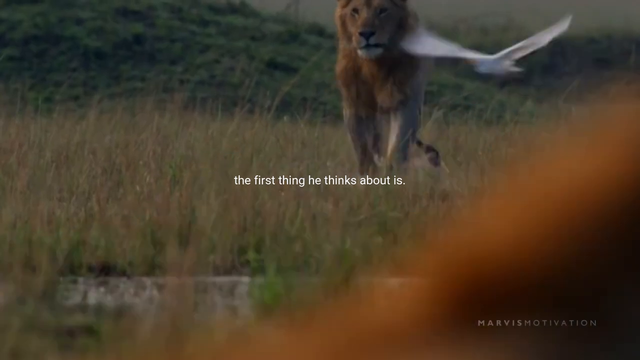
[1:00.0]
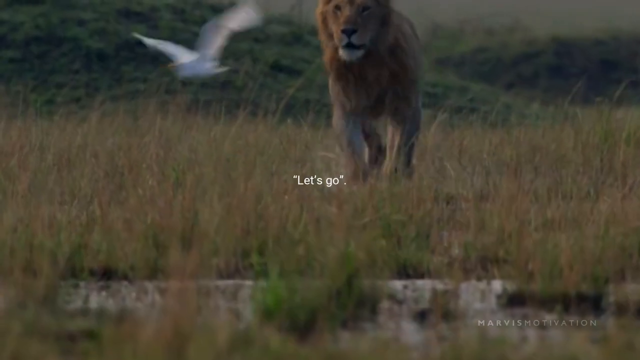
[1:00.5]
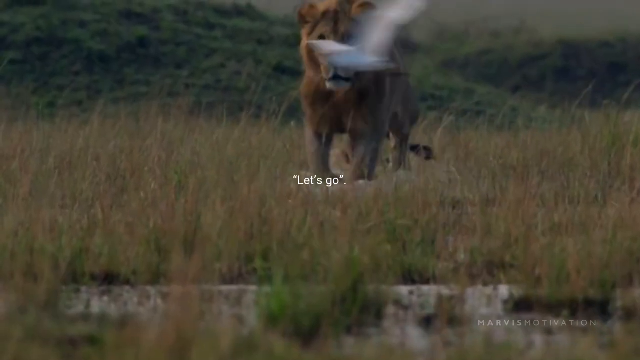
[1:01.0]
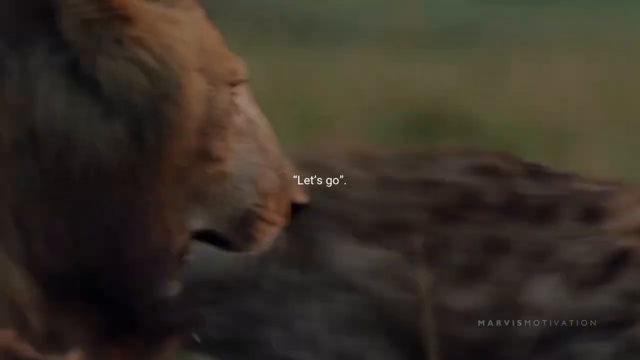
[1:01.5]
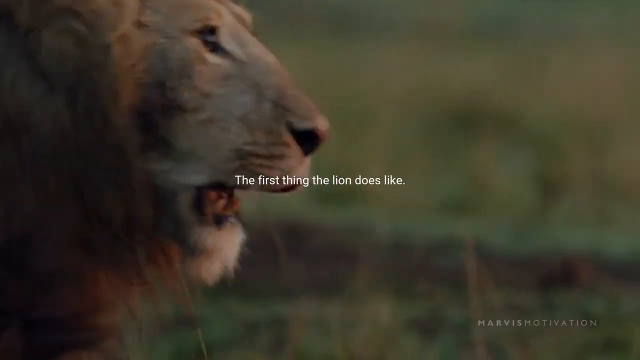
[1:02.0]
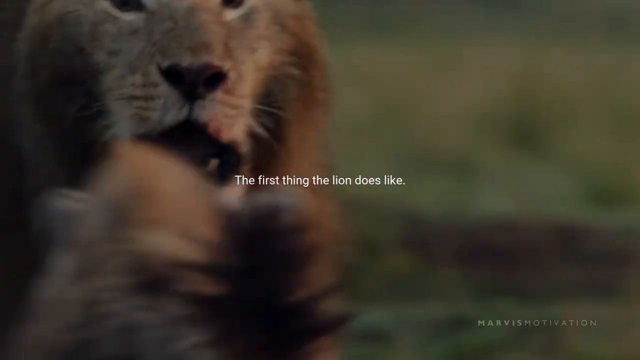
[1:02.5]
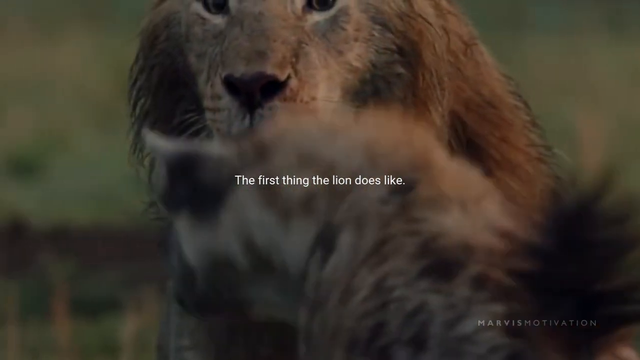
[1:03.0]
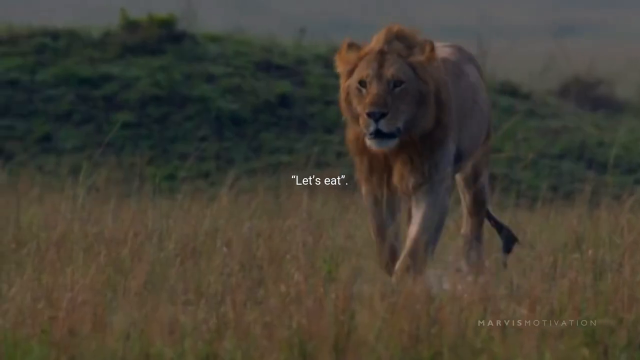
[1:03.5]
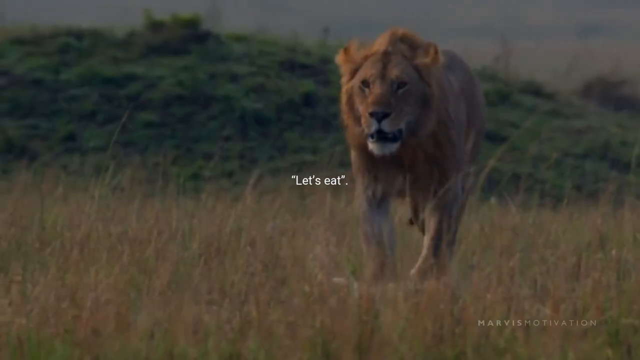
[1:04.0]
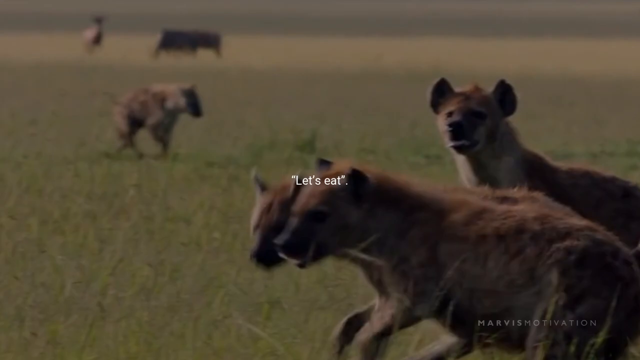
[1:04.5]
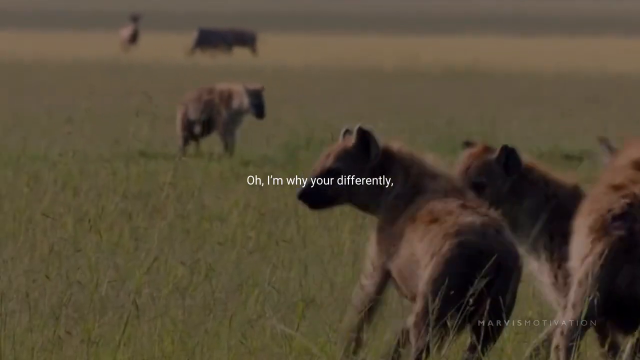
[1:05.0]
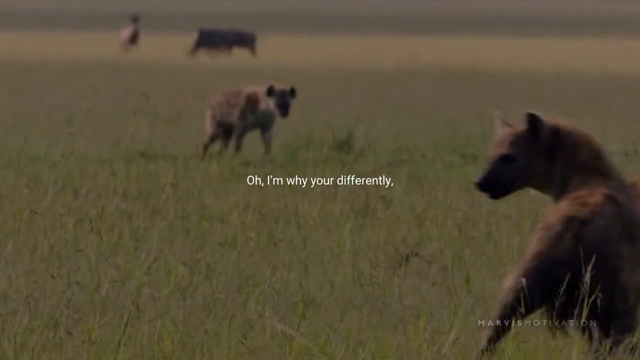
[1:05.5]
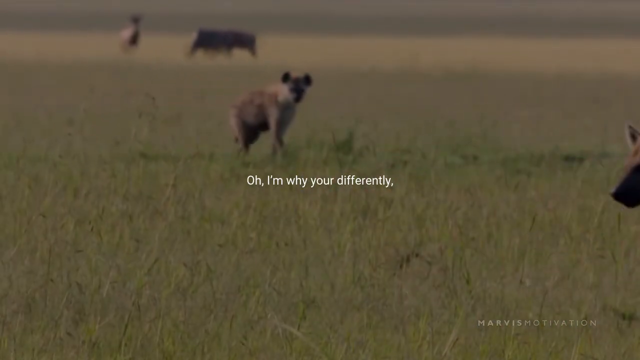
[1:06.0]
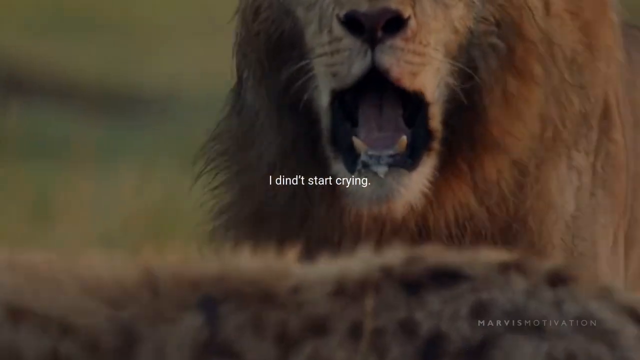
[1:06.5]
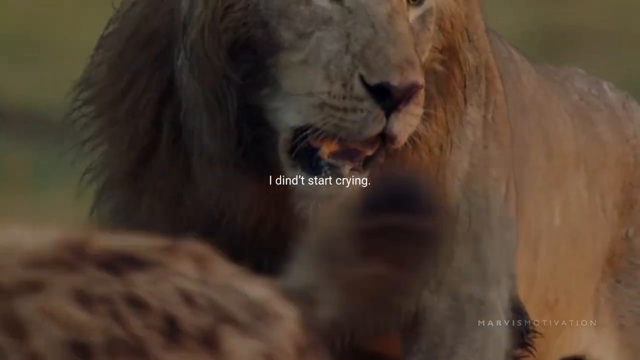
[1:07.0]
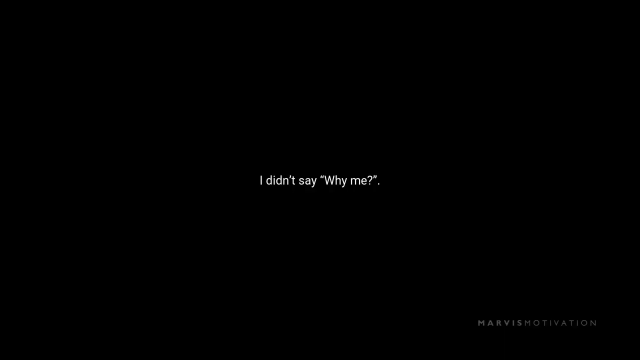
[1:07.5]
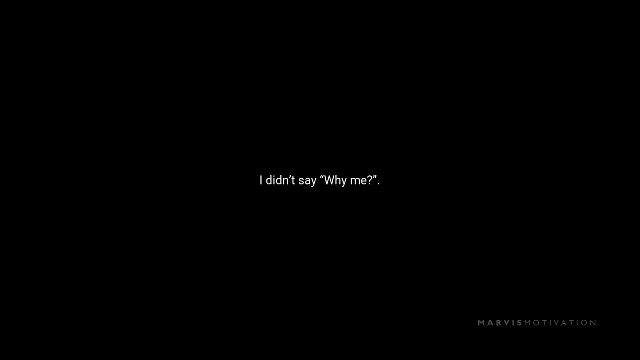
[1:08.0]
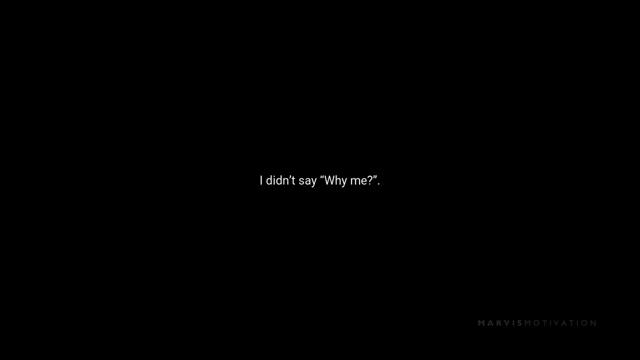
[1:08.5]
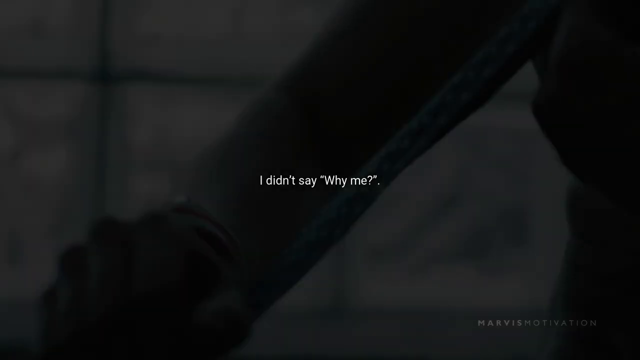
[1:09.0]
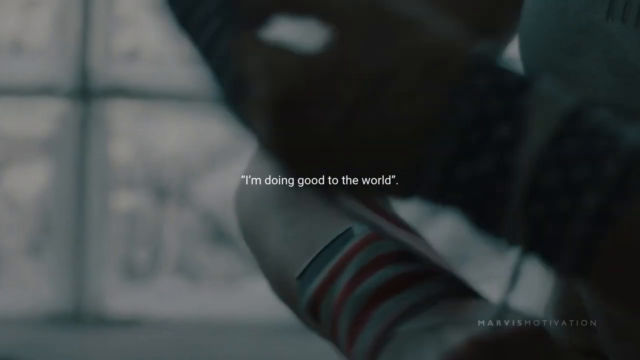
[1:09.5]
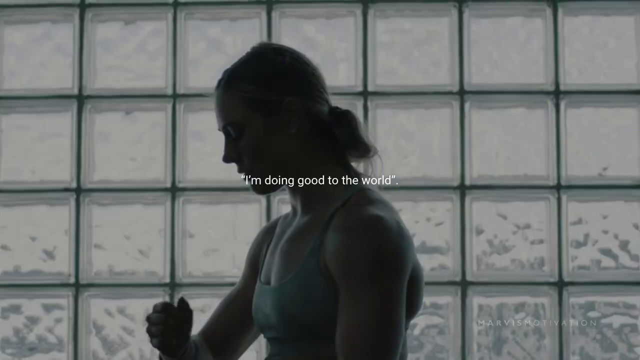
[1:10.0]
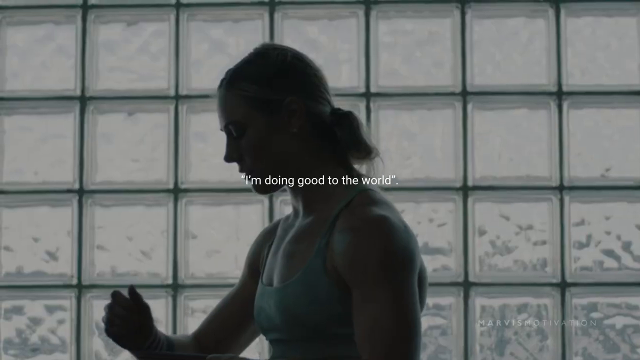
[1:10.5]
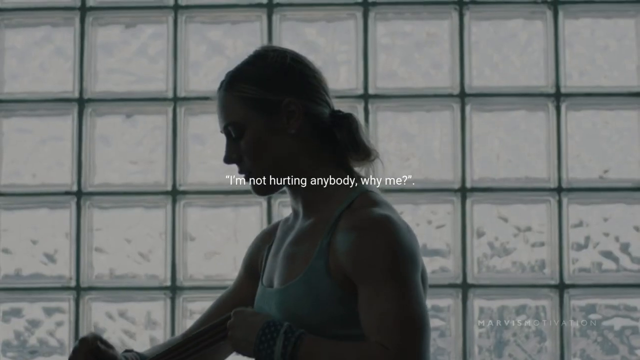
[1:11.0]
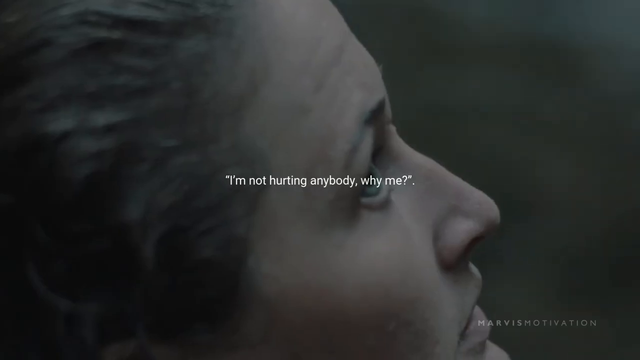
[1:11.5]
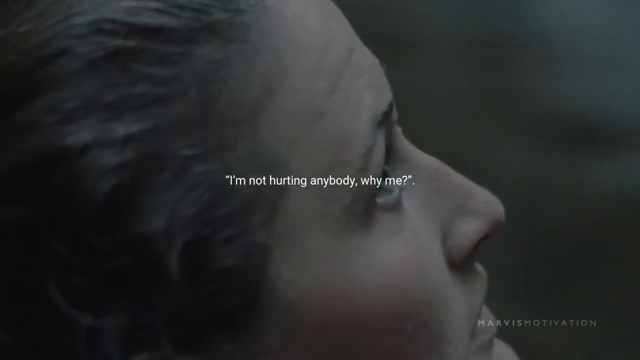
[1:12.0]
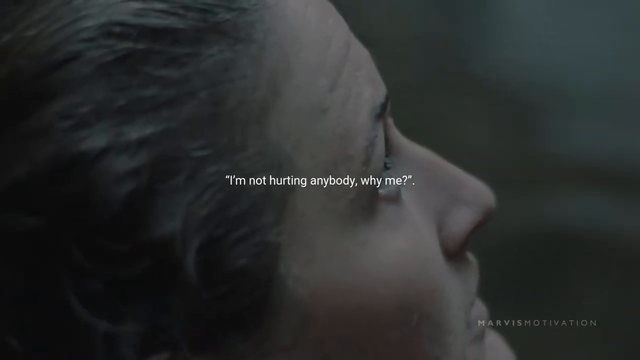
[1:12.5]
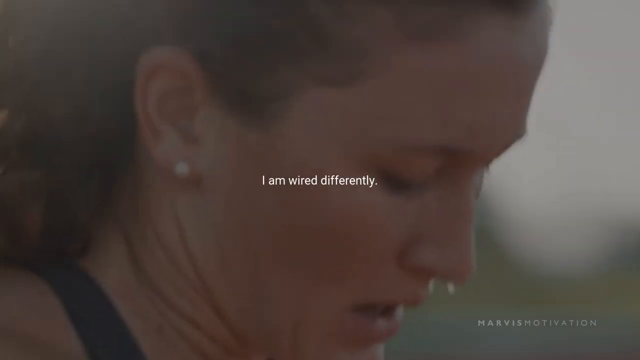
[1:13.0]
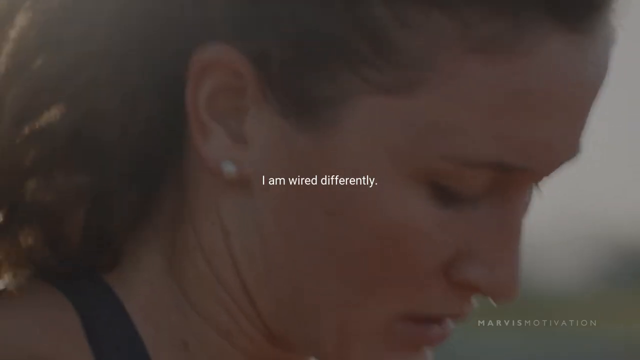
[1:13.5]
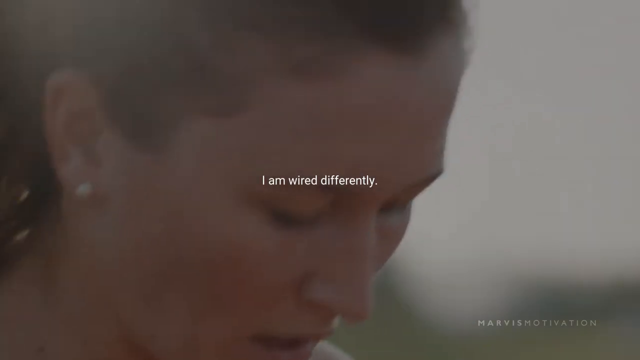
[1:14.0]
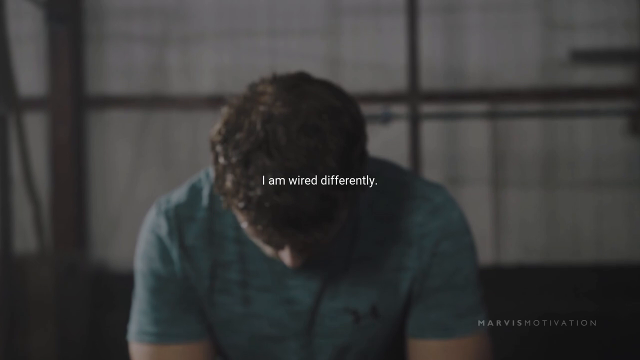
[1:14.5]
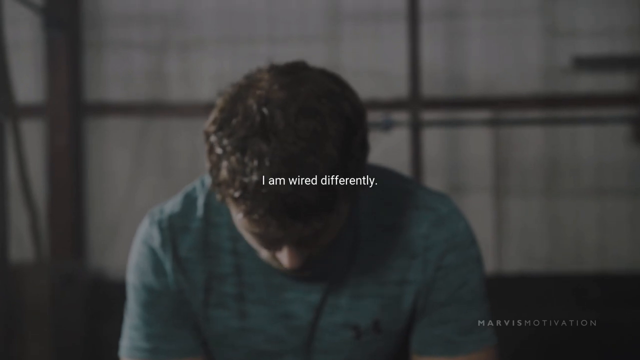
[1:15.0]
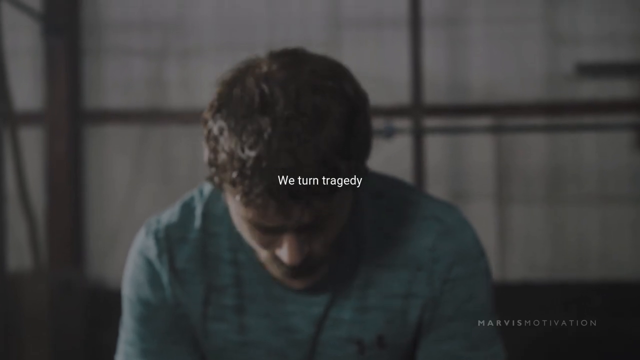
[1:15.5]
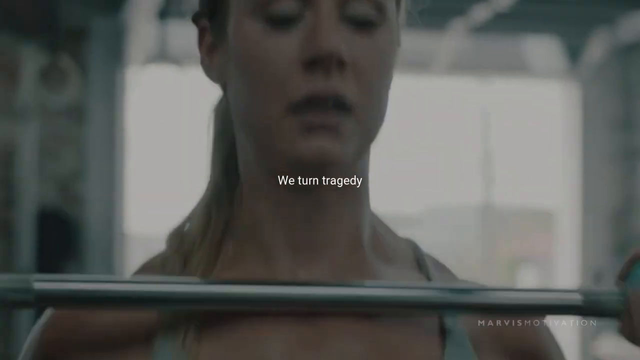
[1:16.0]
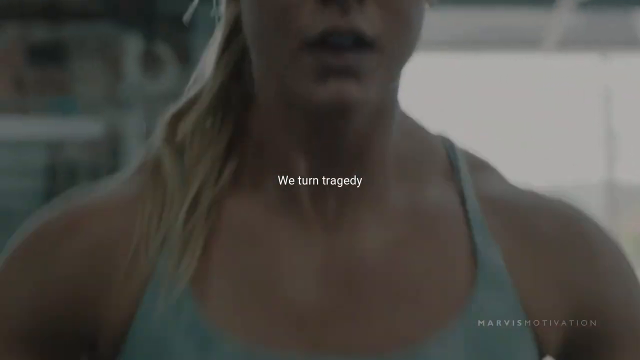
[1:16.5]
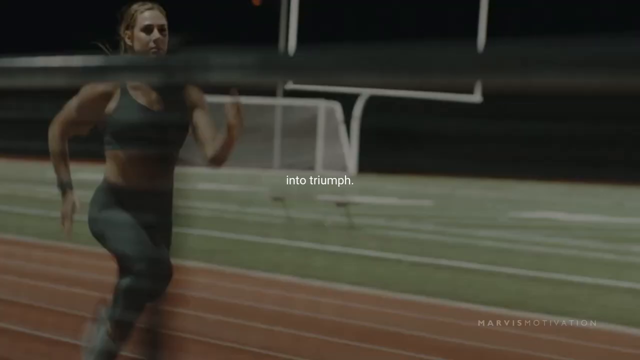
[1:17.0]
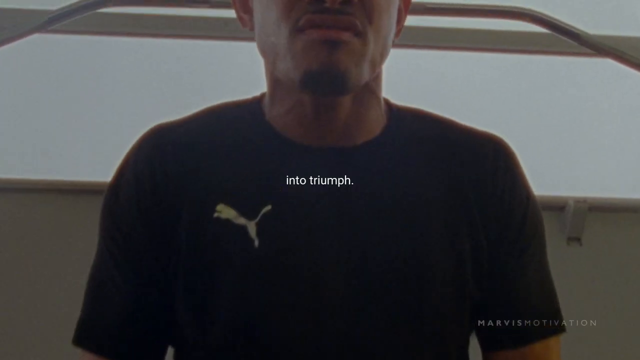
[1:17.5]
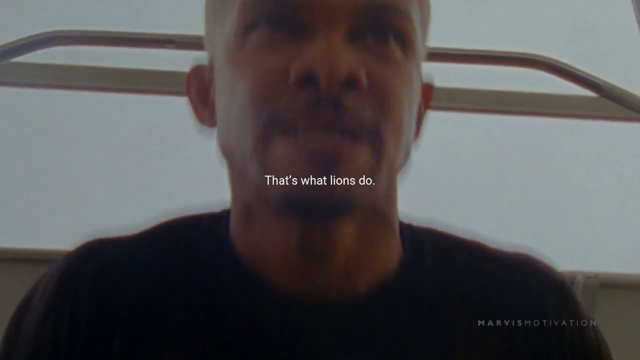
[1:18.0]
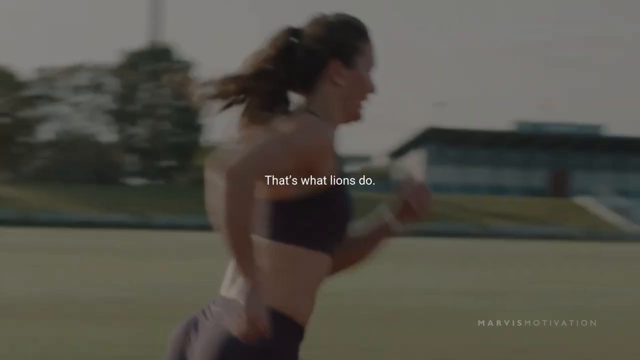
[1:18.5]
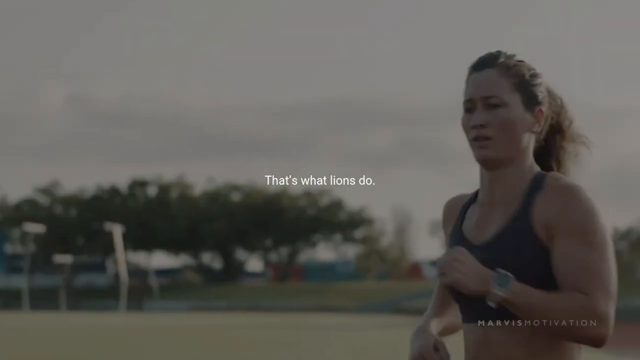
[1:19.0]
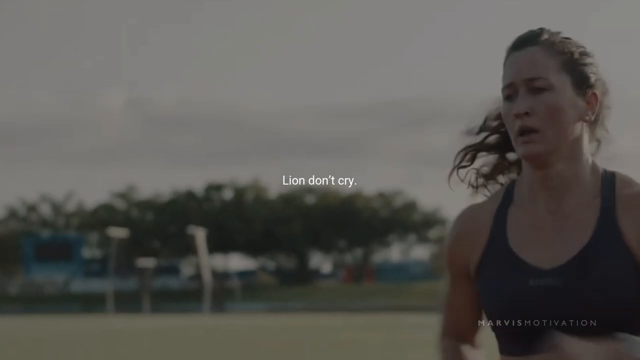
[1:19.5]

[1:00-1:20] A seagull, a lion and a hyena appear with text that reads "the lion says let's eat," followed by lines including "I'm wired different, I didn't start crying, I didn't say why me" and "I'm wired differently, we turn tragedy into triumph, that's what lions do." The video transitions into motivational screens: a female with brown hair in a gym-like environment, other animals and people with motivational-style text, then a series of cuts showing a female, a male, a female working out in the gym, a female running track, a male in a Puma shirt, and a female running track, among multiple other motivational-style cuts.